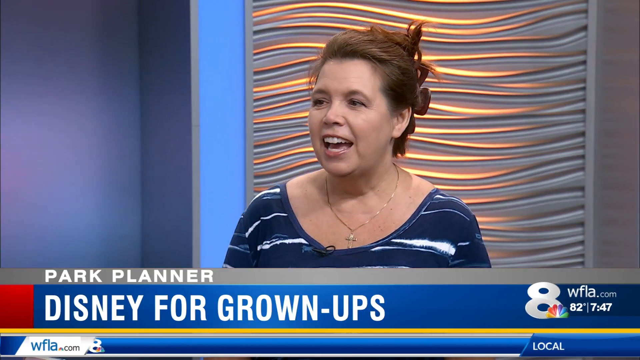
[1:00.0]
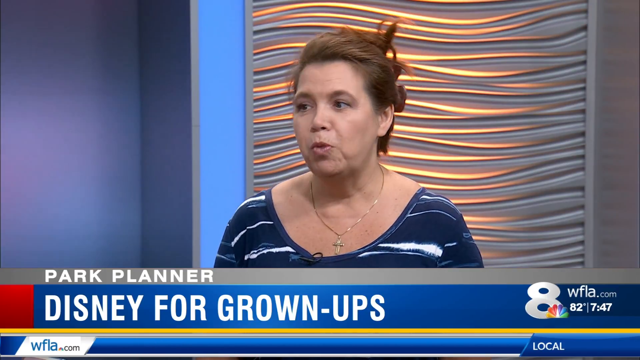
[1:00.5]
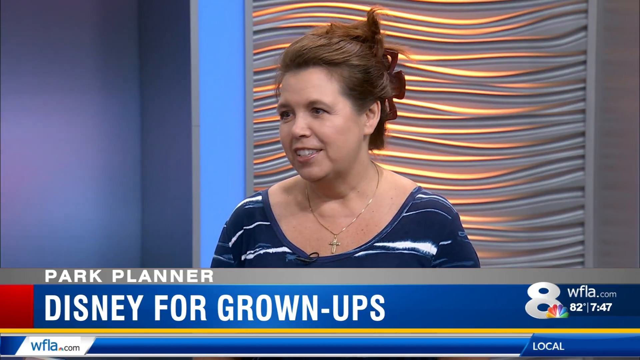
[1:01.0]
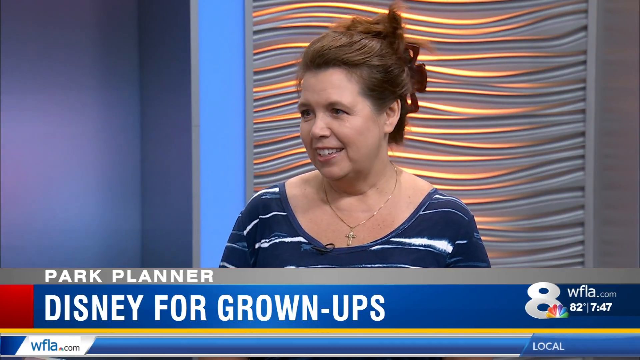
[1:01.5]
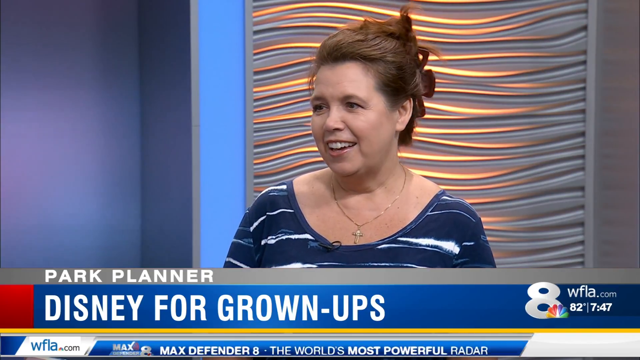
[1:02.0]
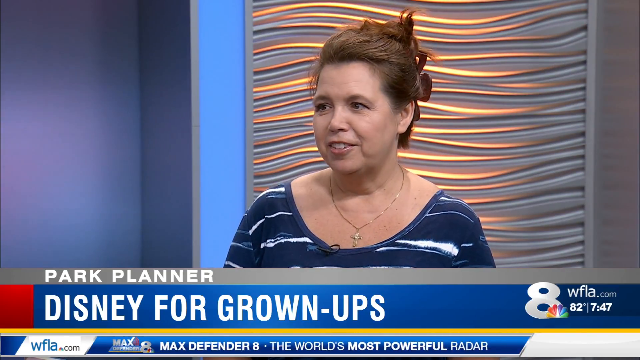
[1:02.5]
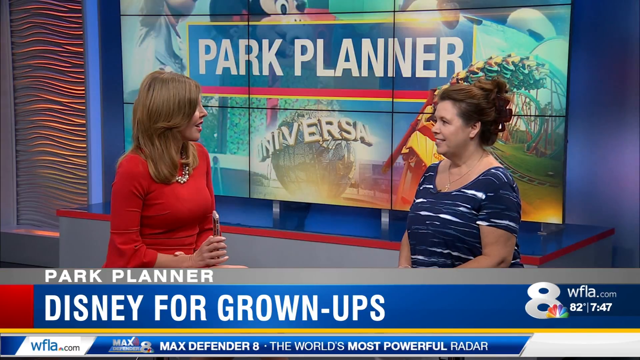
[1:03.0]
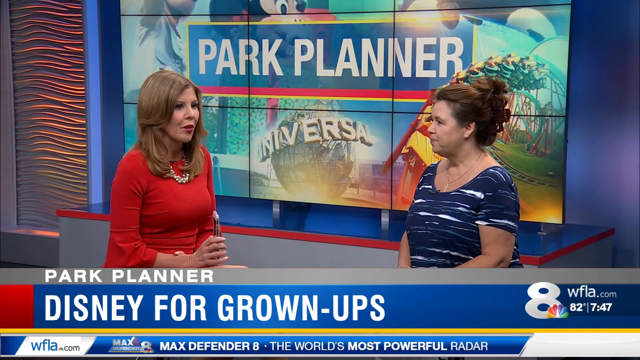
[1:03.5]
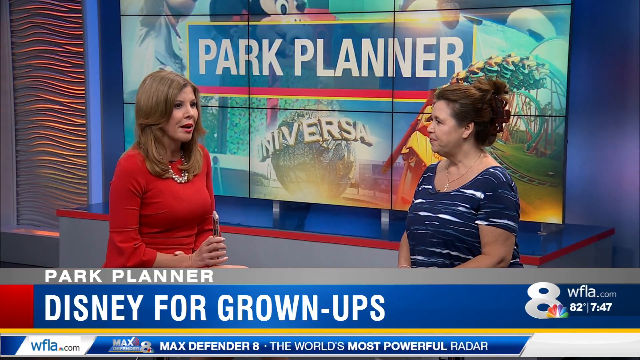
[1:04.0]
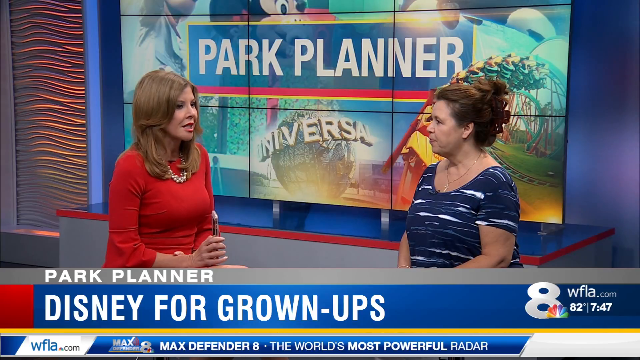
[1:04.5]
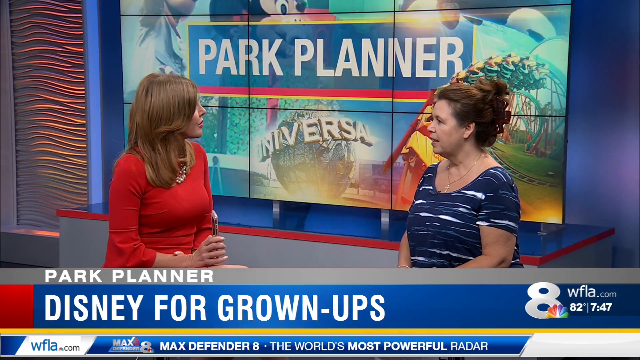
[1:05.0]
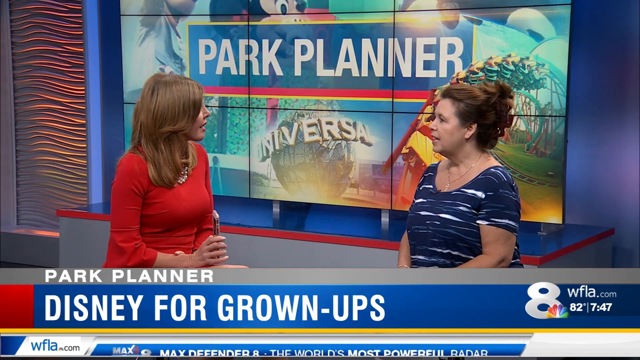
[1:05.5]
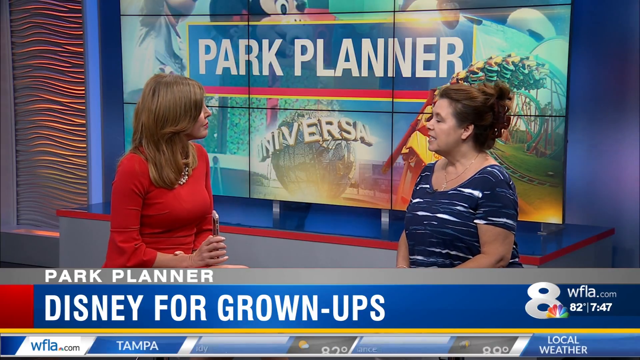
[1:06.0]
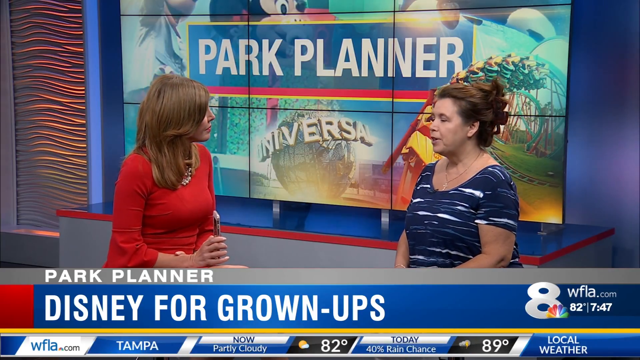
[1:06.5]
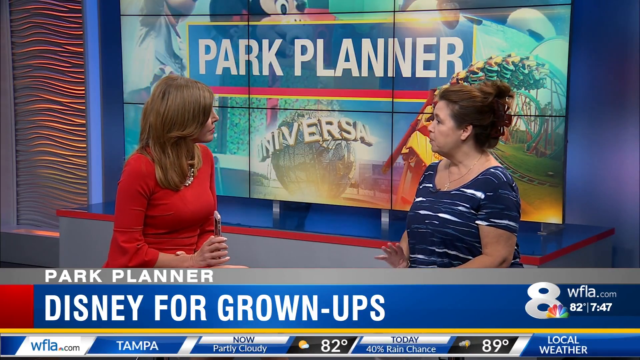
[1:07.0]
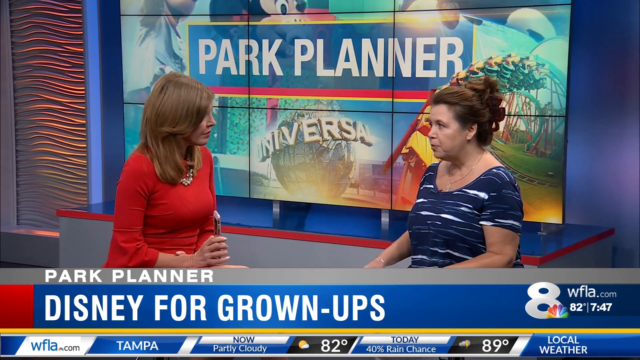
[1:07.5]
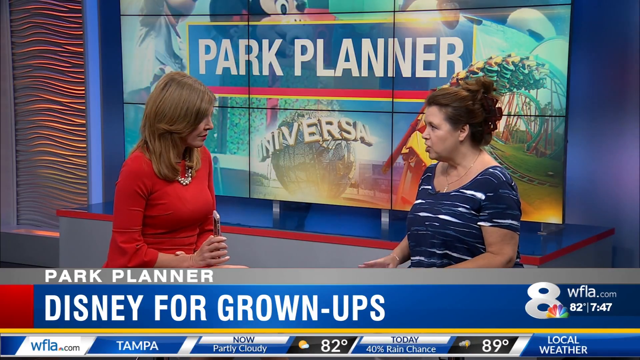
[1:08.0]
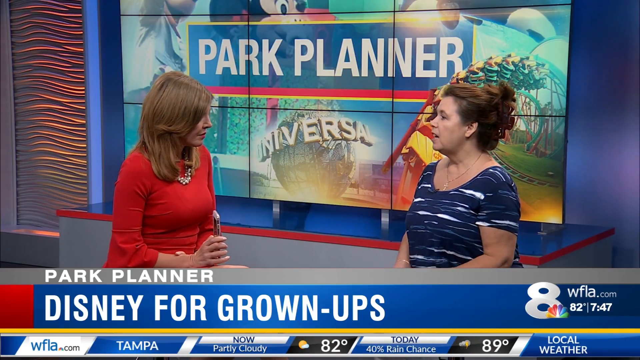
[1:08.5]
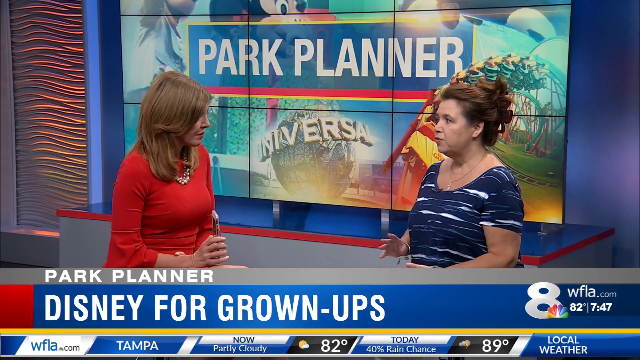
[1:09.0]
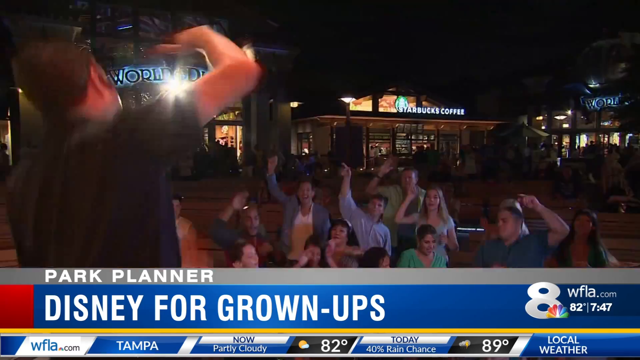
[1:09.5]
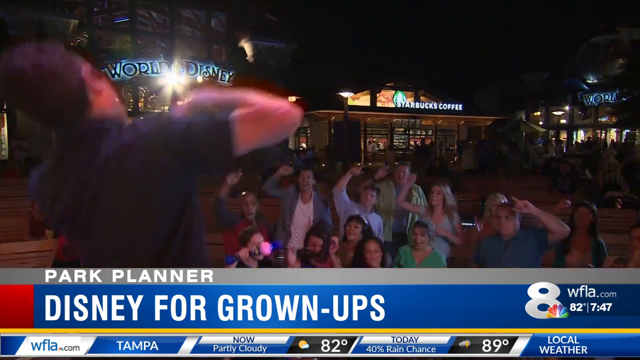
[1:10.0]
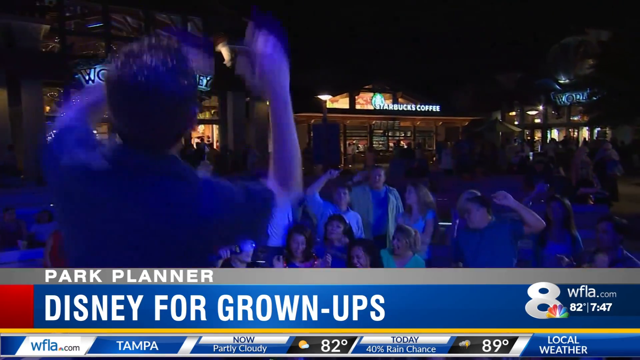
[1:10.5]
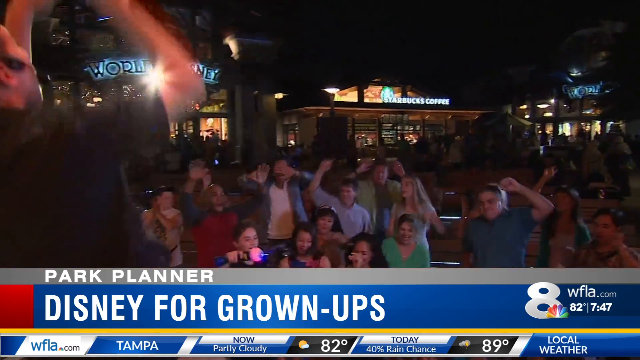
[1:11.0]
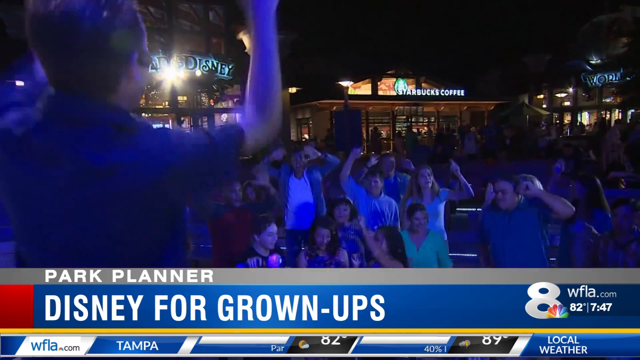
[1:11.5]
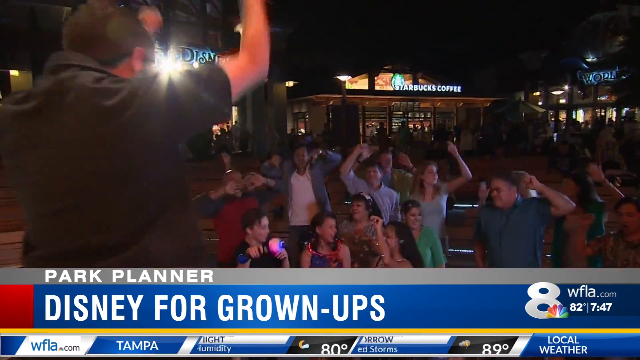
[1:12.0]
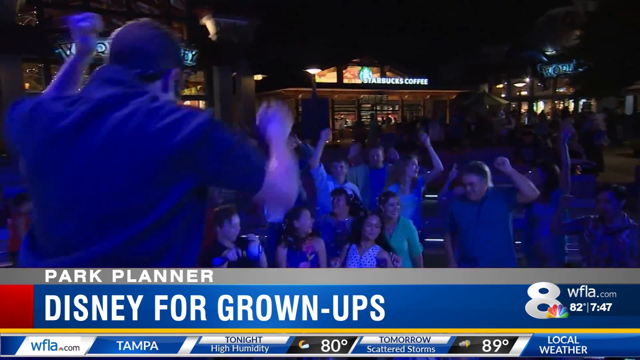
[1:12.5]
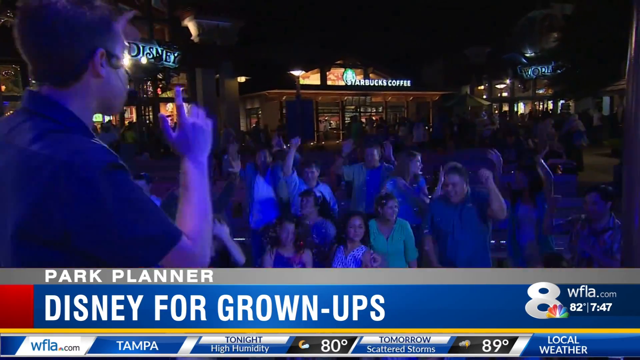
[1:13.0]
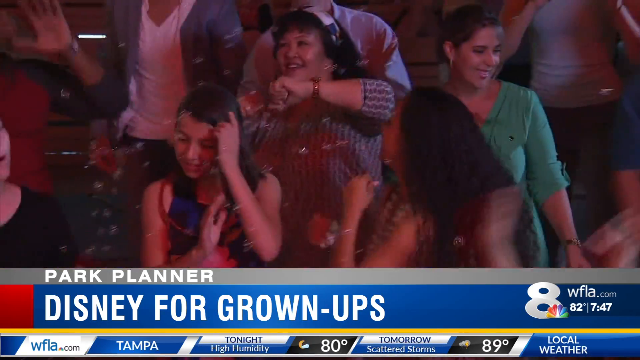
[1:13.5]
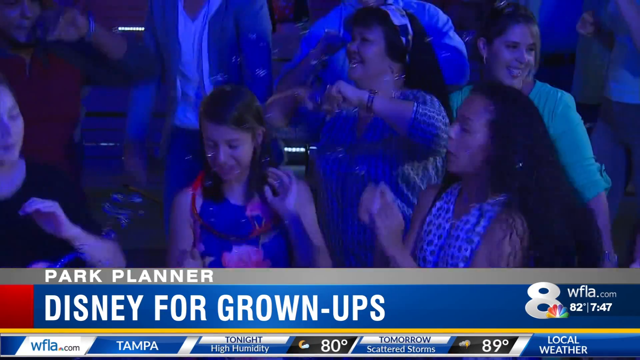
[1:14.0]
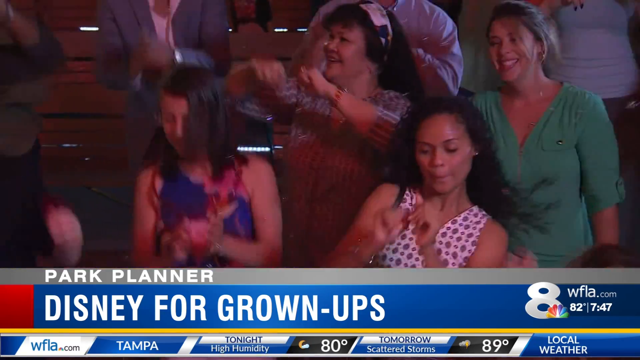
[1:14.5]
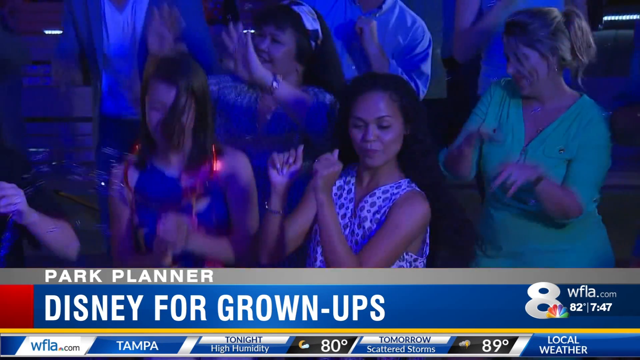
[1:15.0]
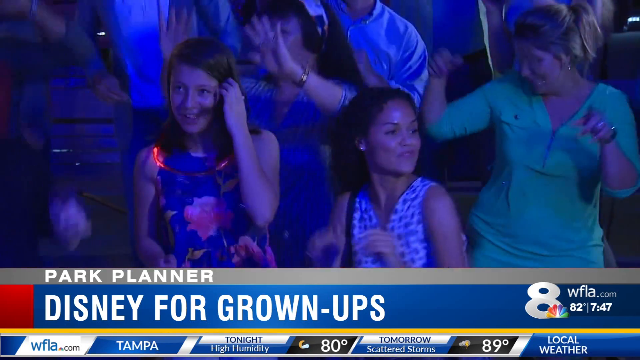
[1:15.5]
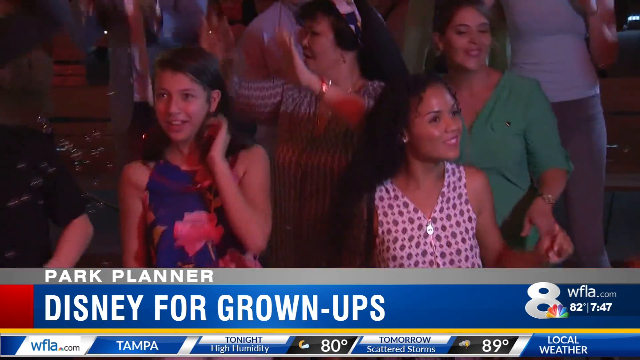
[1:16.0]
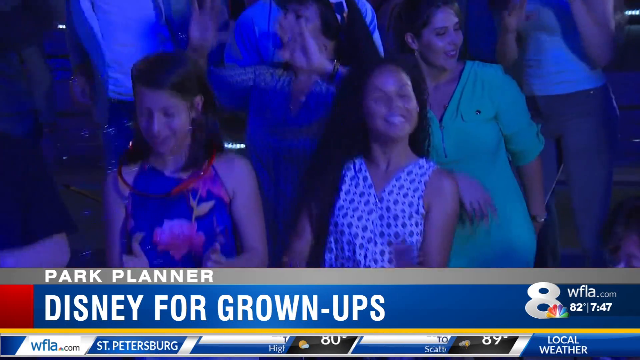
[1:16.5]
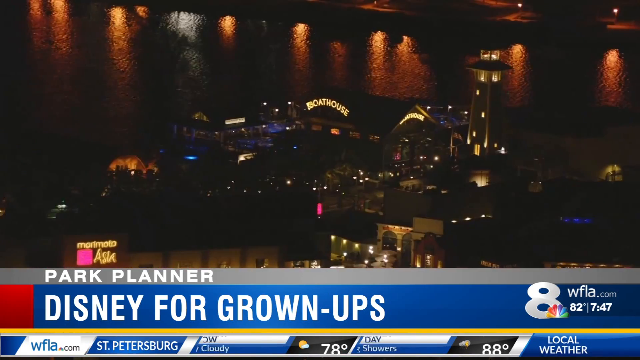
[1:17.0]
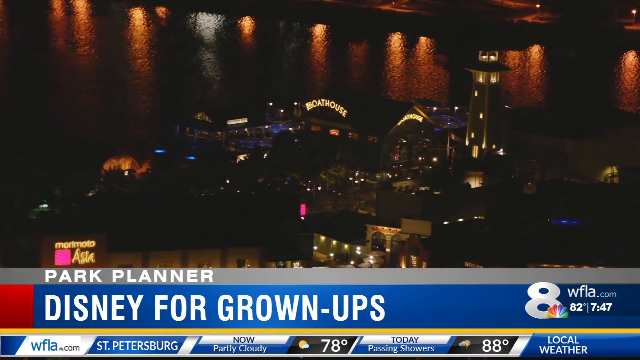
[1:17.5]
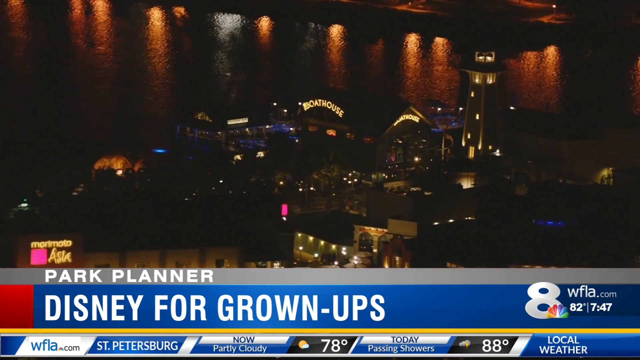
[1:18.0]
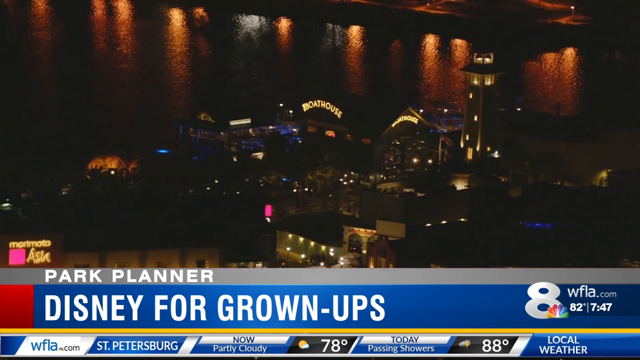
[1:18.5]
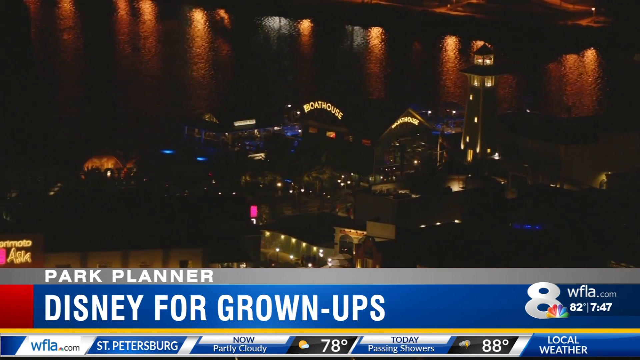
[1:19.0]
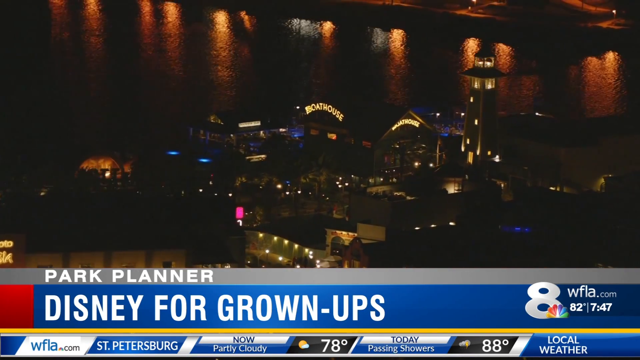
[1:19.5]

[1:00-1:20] Kathy is still in the frame speaking to the interviewer, Gayle, still wearing the blue and white T-shirt. She opens her mouth to speak and smiles slightly, and seems very excited about what she is saying. A few seconds in, the camera pans out to show Kathy on the right and Gayle in the red dress on the left. Gayle holds something unclear in her hands and speaks to Kathy. Behind the women is a screen with a collage of various Disney and Universal characters, an orca whale and a roller coaster, with the text "park planner" over the image. The women continue talking, and Gayle turns her head to ask Kathy another question, which Kathy begins answering, using her hands as she speaks. Next comes b-roll of what seems to be a party at one of the Disney or other theme parks, with a blue light shining over the entire audience. A man at the front of the screen seems to be leading the audience in some sort of cheer or dance. The camera zooms into various people dancing, mostly women and some children.